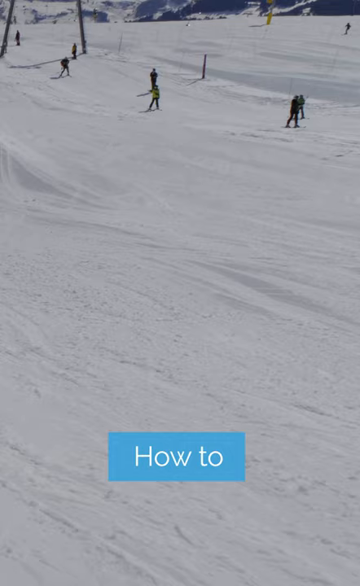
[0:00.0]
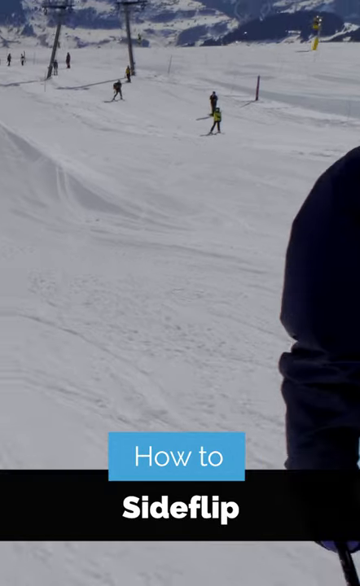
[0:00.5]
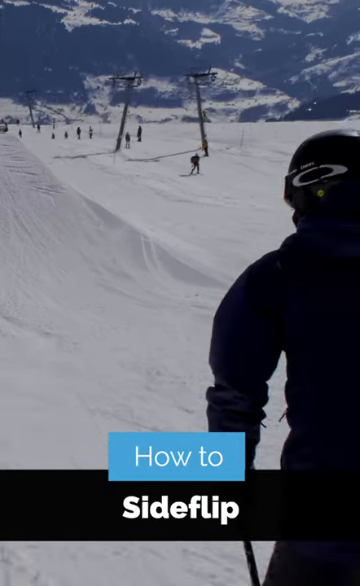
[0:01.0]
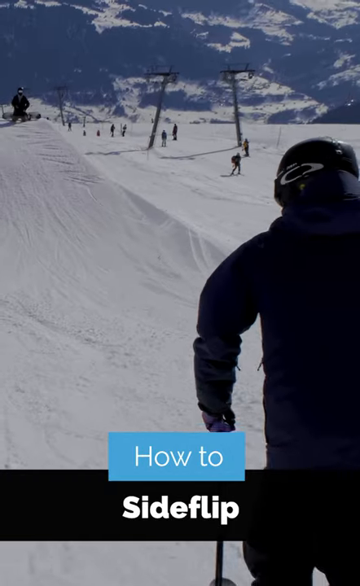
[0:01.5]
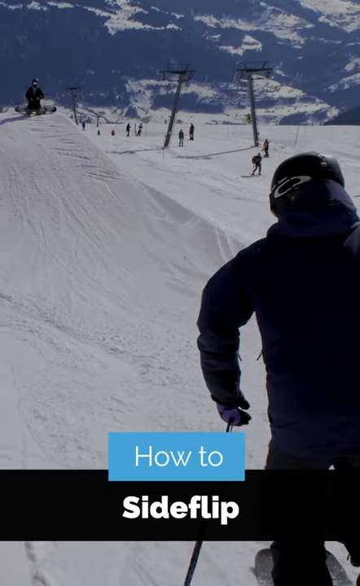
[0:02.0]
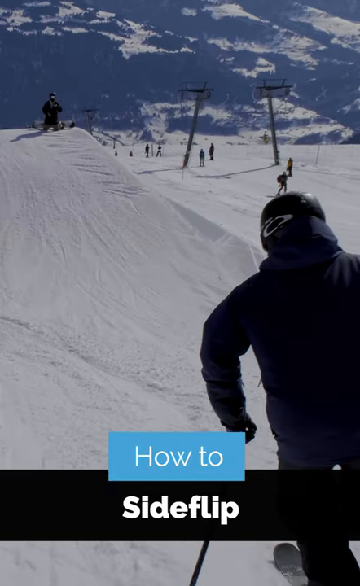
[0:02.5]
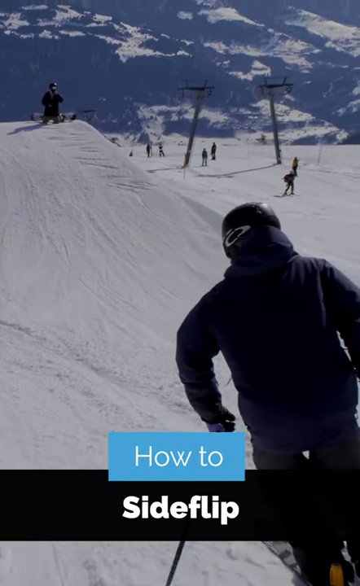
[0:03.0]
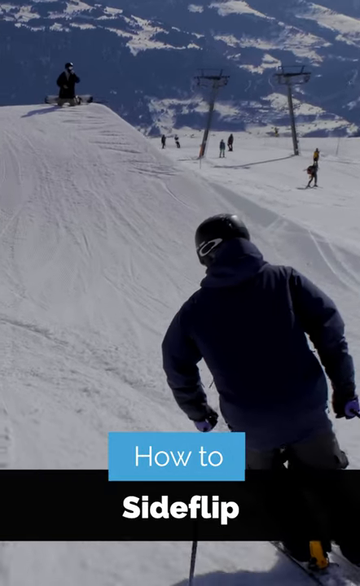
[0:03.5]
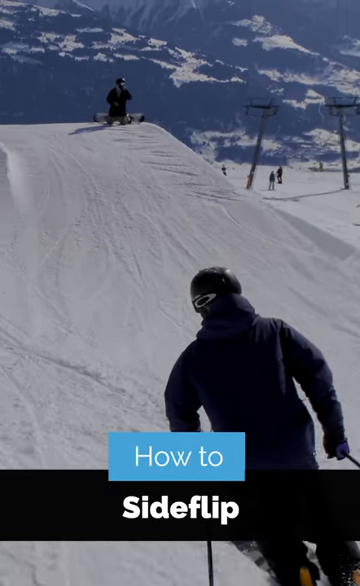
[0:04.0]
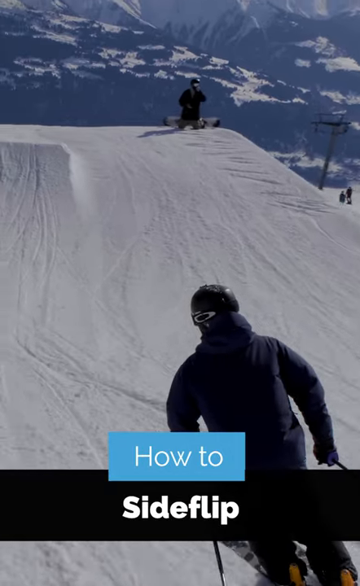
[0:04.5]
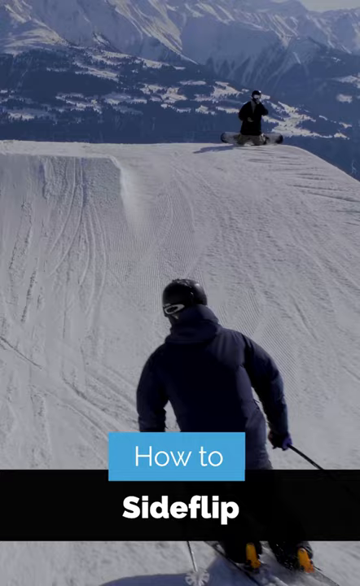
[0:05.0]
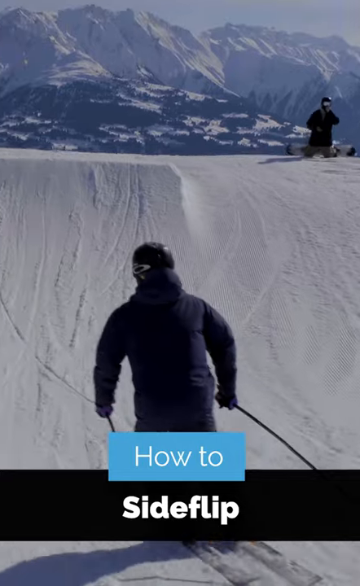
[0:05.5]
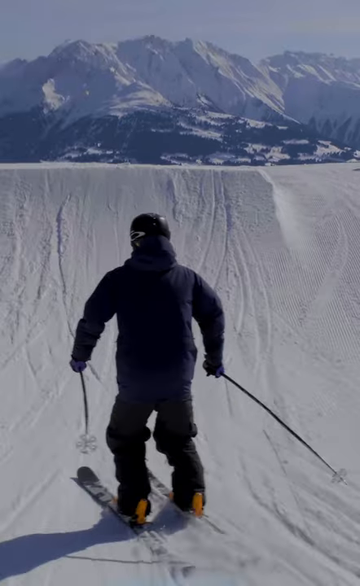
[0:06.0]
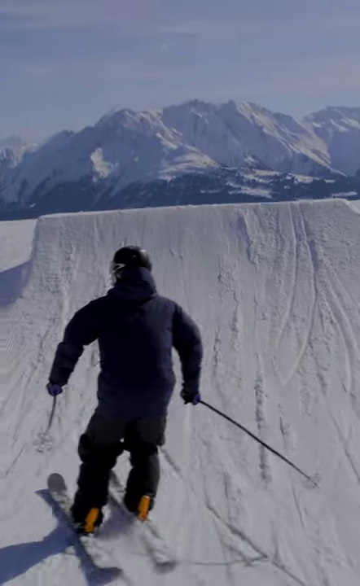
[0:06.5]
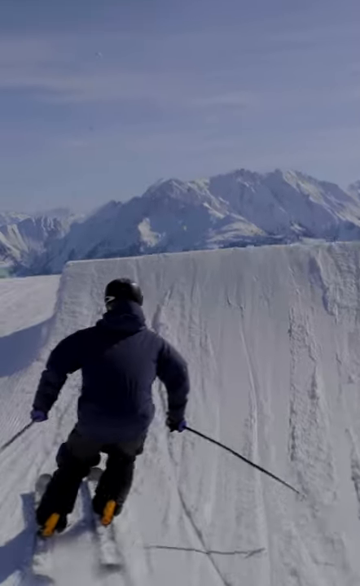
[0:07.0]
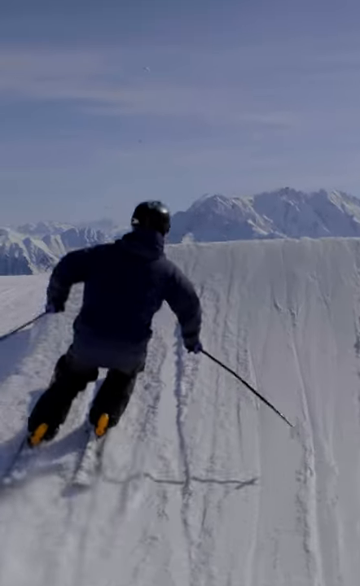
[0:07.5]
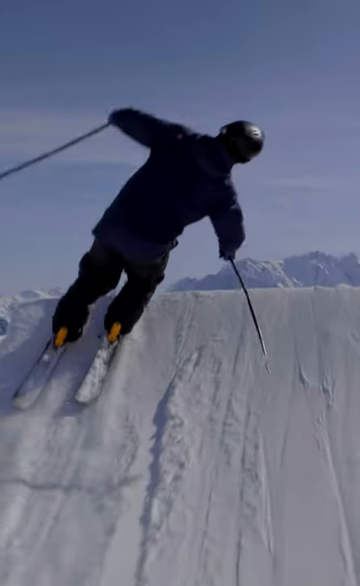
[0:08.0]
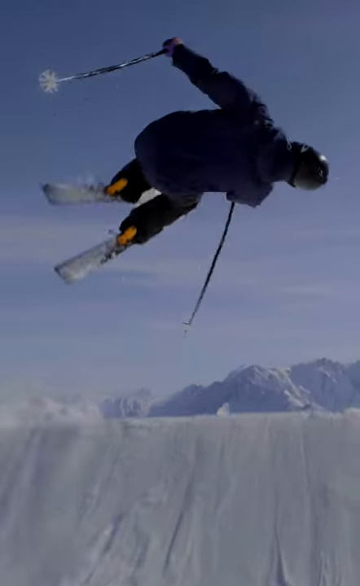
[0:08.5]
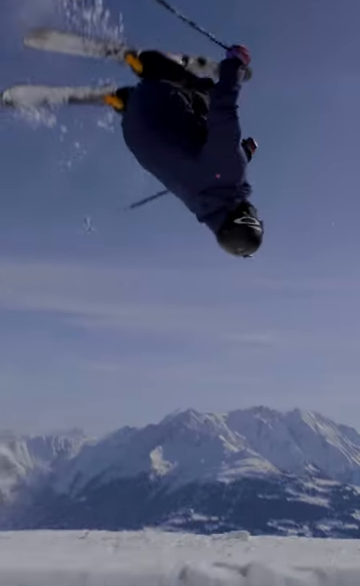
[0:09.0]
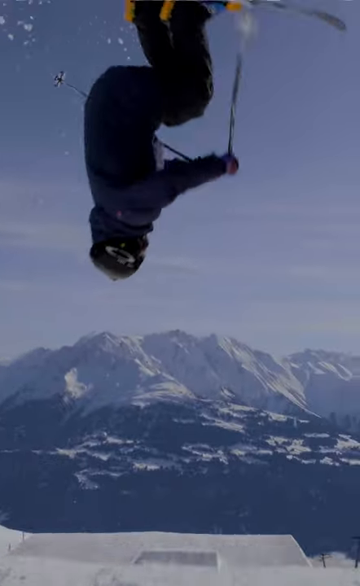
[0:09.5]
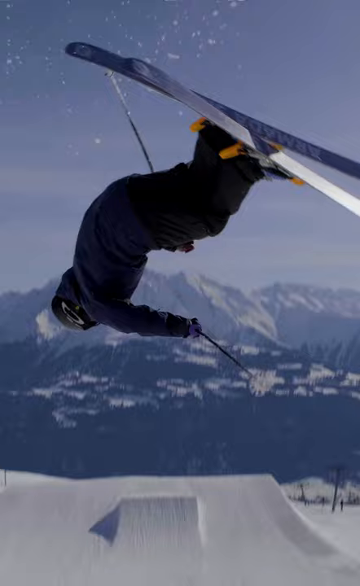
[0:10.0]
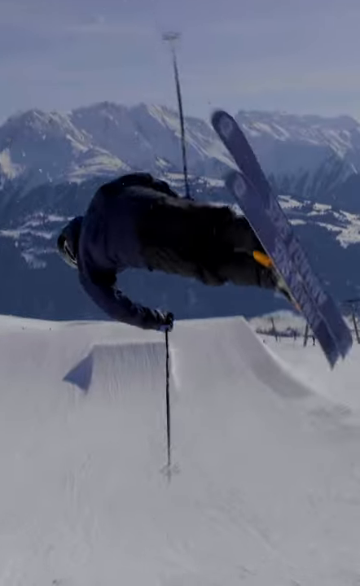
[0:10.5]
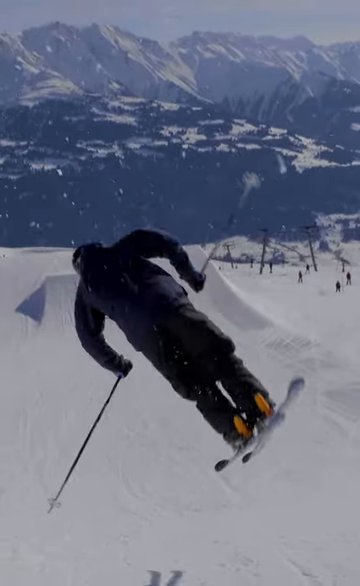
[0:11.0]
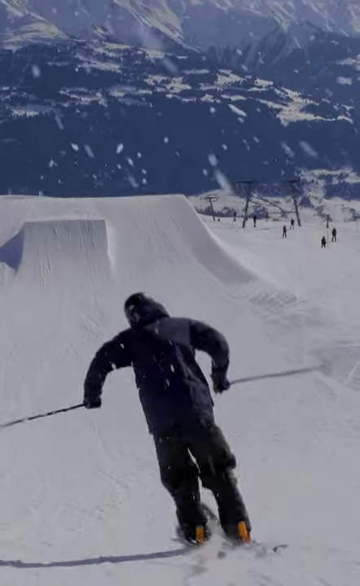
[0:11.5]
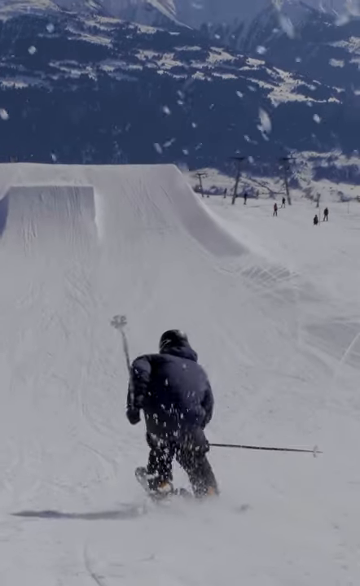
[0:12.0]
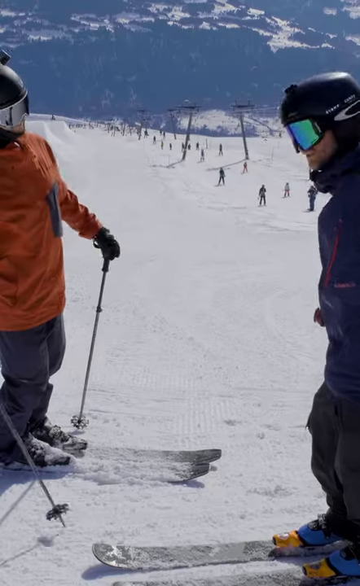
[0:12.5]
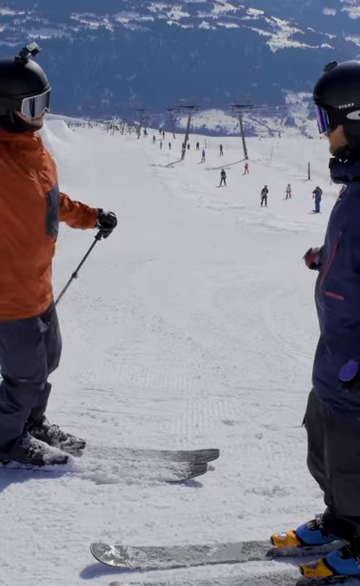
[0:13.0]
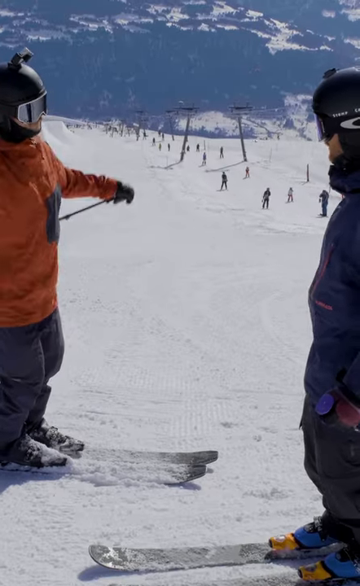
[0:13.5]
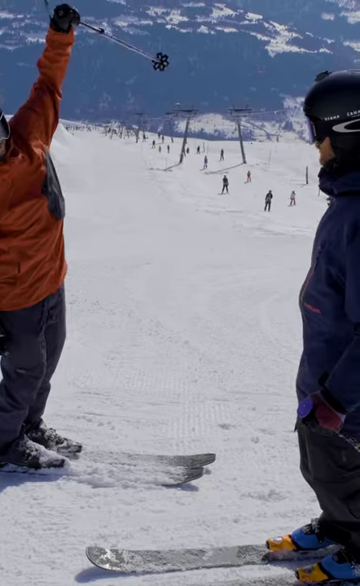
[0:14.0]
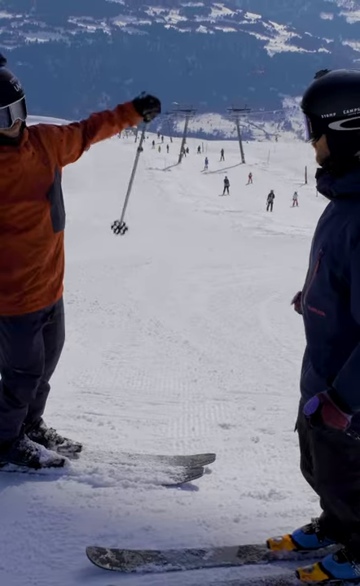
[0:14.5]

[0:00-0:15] A skier is skiing and doing jumps on what looks like a skier's obstacle course. The man goes up the first ramp, shoots off it, does a sort of sideways flip and lands it. He wears black snow pants, a navy snow jacket, gloves, a helmet and ski goggles. The setting looks like the mountains somewhere, with good snow and mountains visible in the background. A couple of other people are skiing in the background, and it is a bright, sunny day. Toward the end, another skier in an orange jacket appears, and the first skier is talking to him.